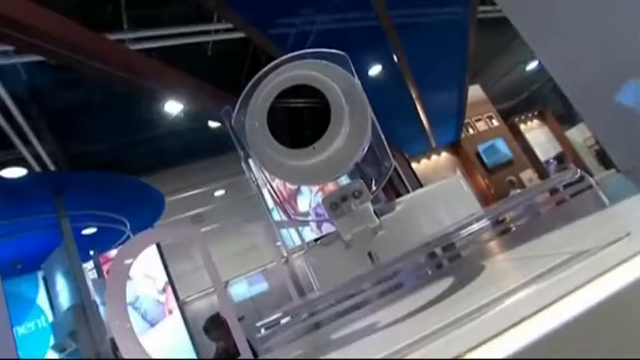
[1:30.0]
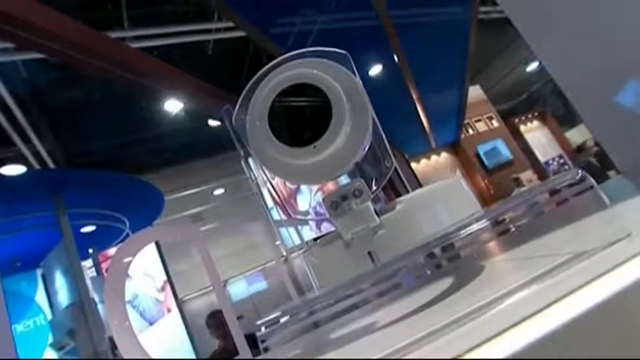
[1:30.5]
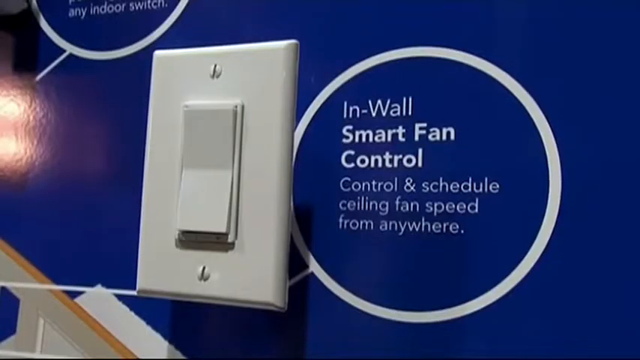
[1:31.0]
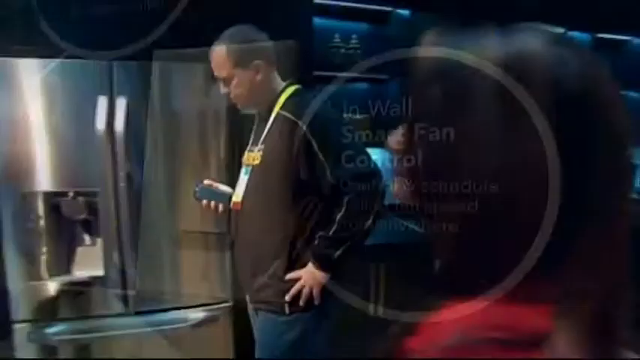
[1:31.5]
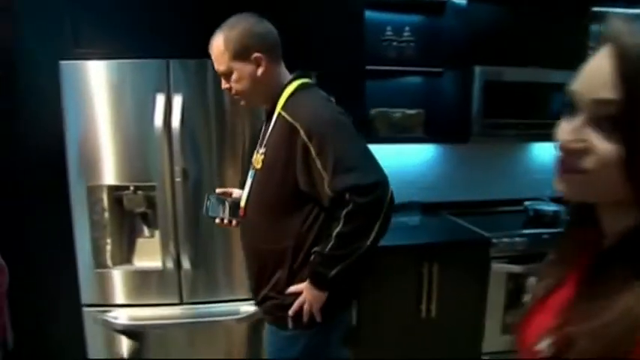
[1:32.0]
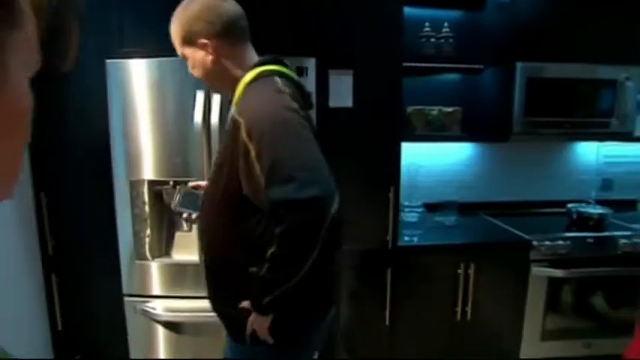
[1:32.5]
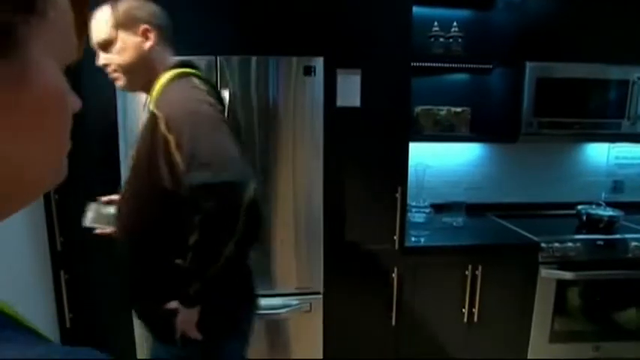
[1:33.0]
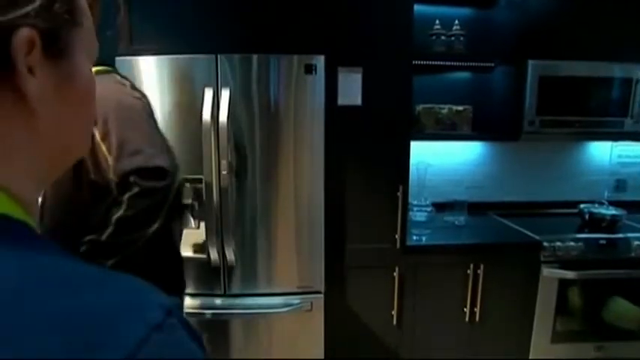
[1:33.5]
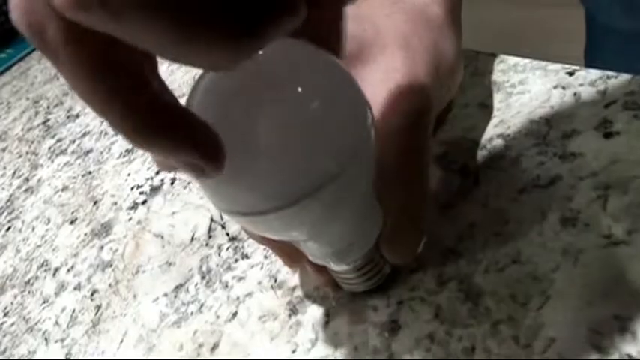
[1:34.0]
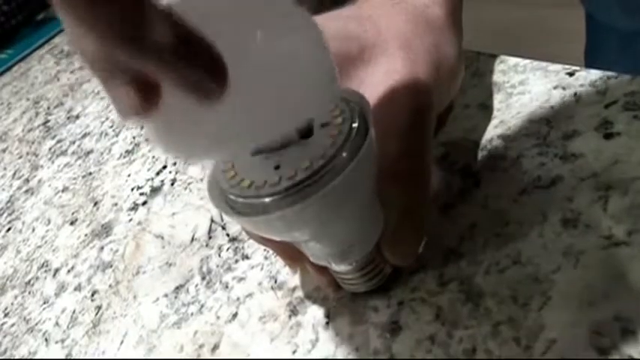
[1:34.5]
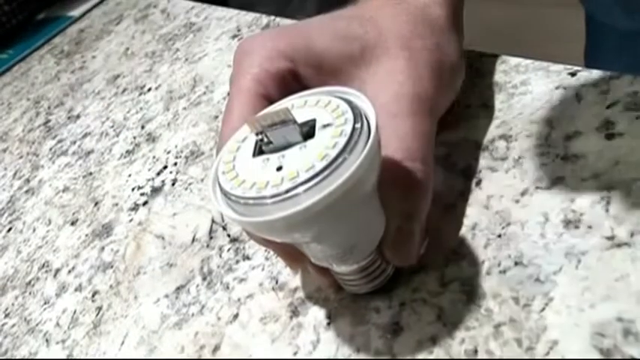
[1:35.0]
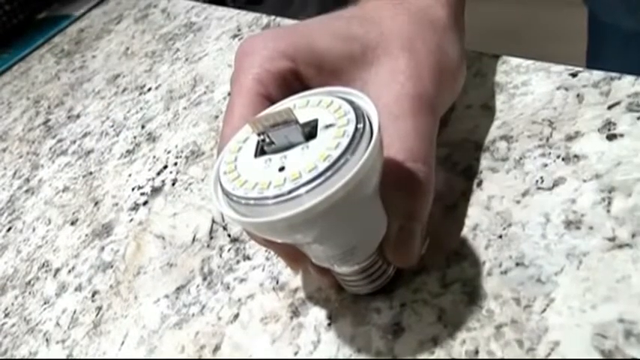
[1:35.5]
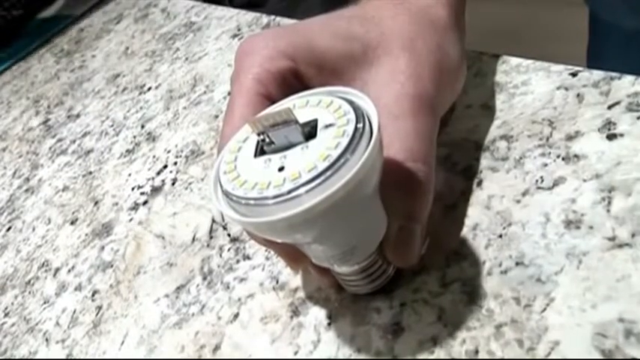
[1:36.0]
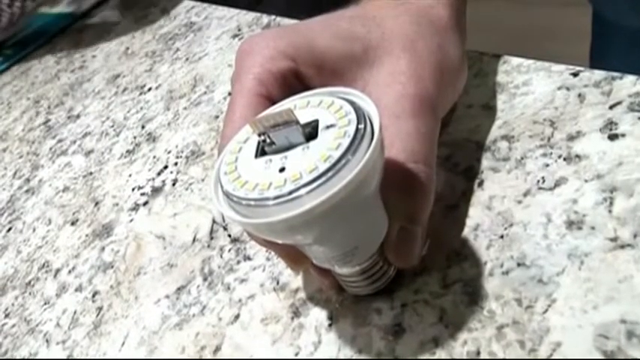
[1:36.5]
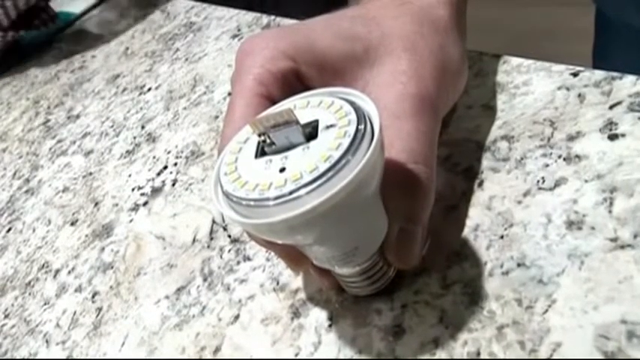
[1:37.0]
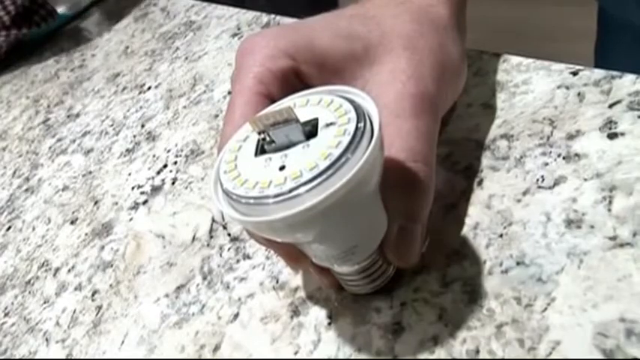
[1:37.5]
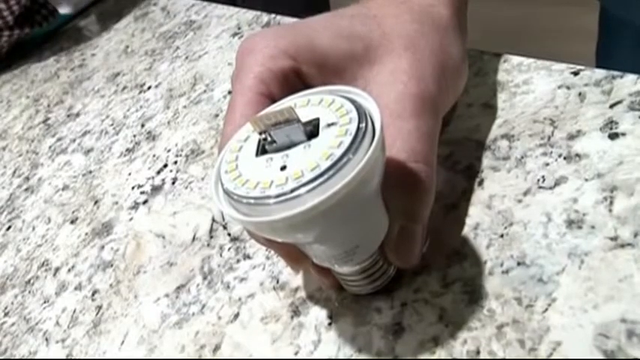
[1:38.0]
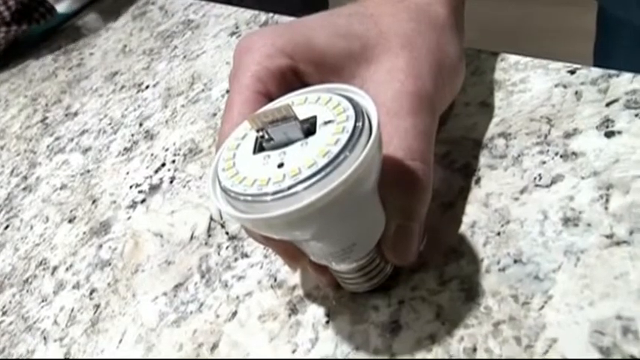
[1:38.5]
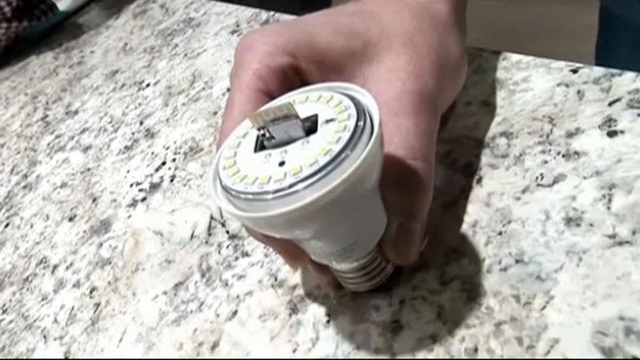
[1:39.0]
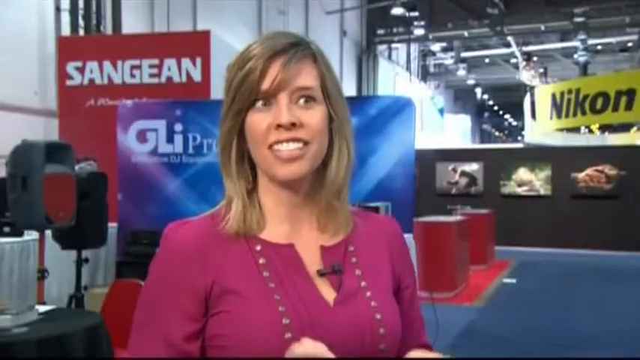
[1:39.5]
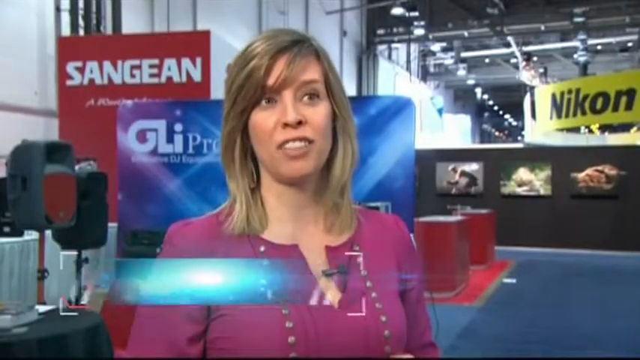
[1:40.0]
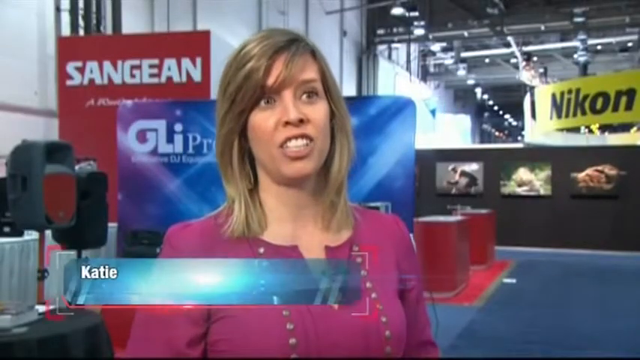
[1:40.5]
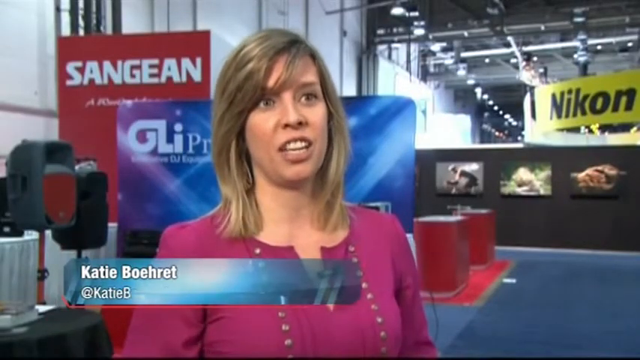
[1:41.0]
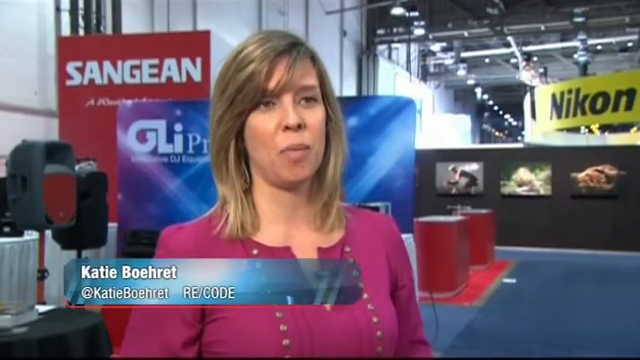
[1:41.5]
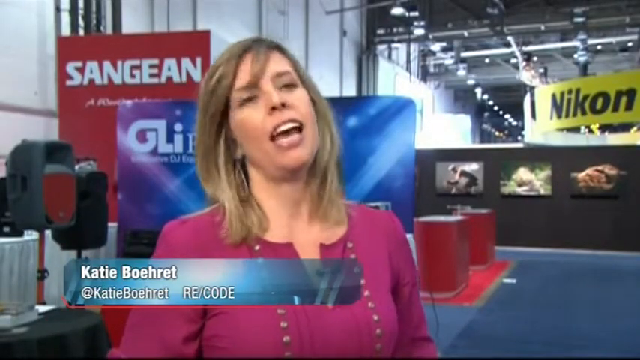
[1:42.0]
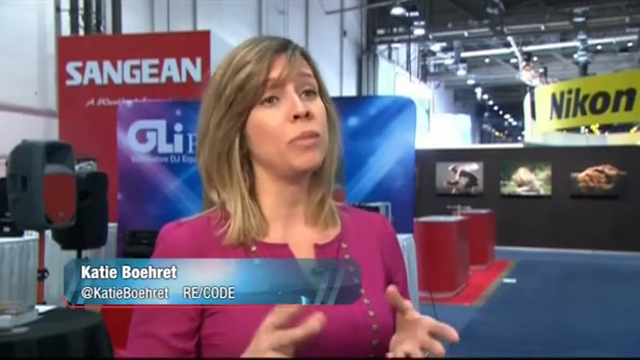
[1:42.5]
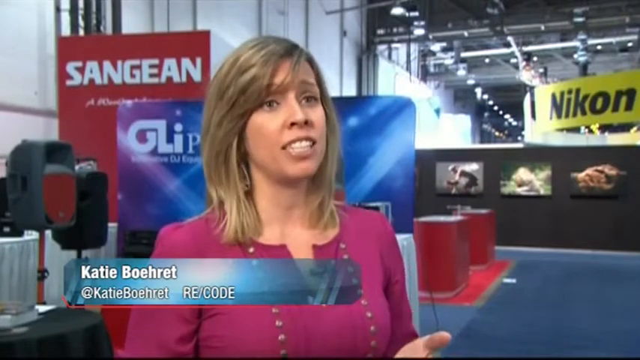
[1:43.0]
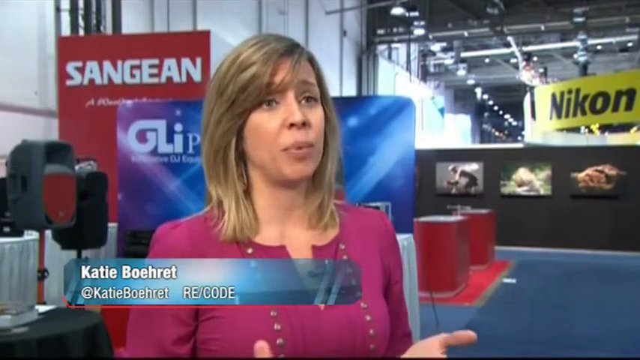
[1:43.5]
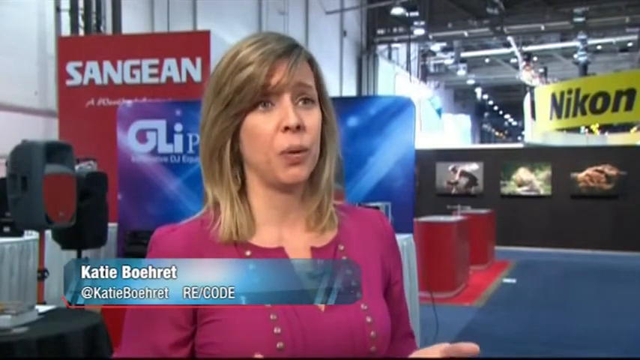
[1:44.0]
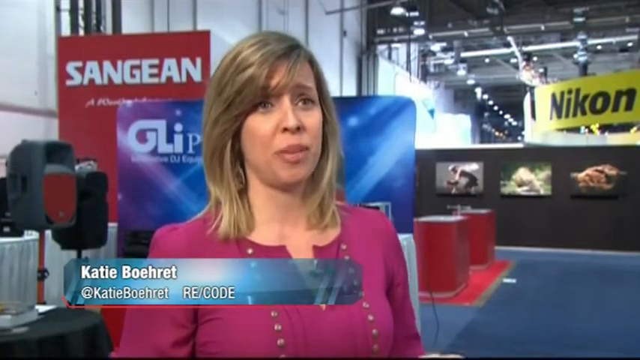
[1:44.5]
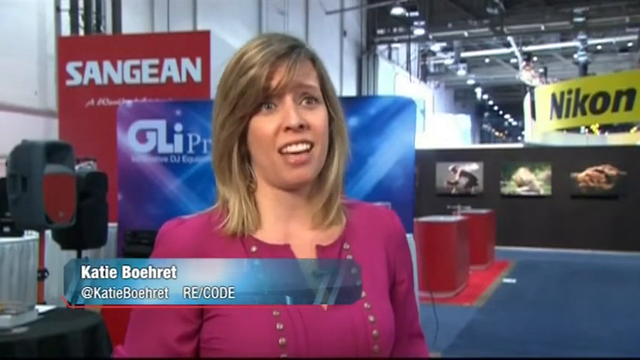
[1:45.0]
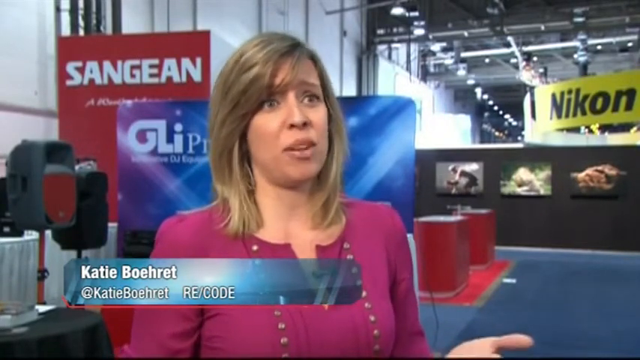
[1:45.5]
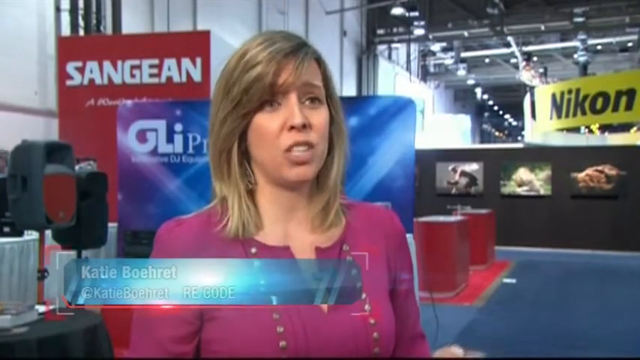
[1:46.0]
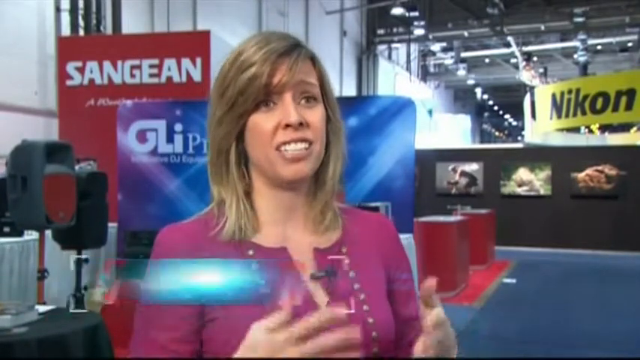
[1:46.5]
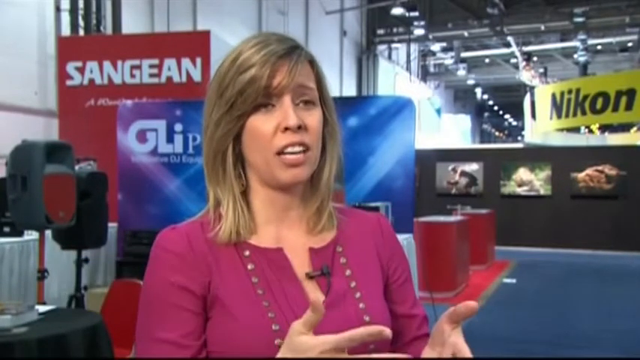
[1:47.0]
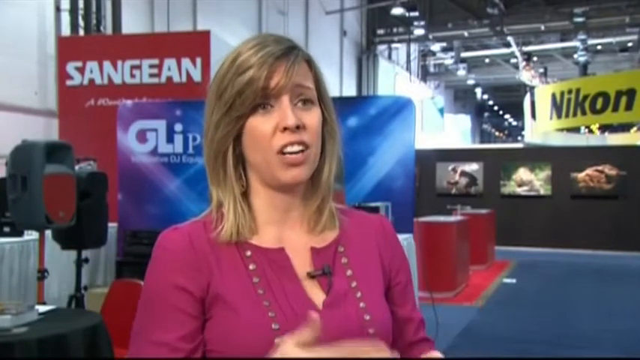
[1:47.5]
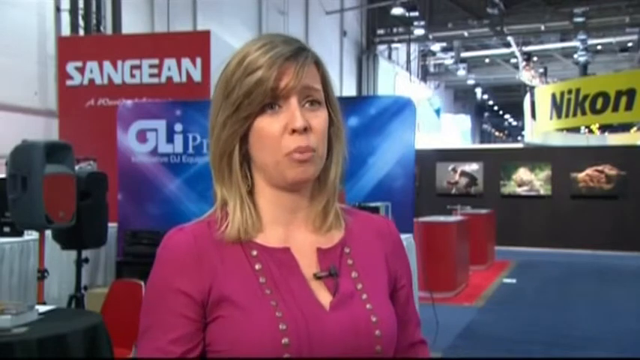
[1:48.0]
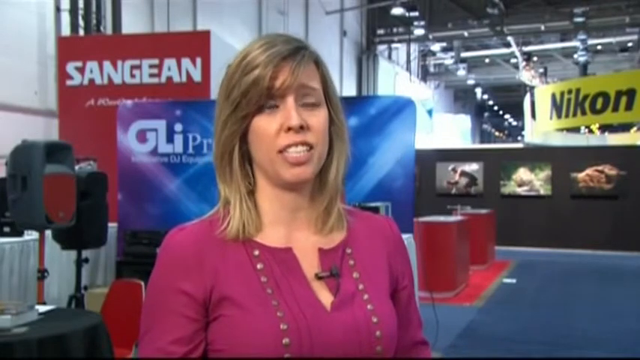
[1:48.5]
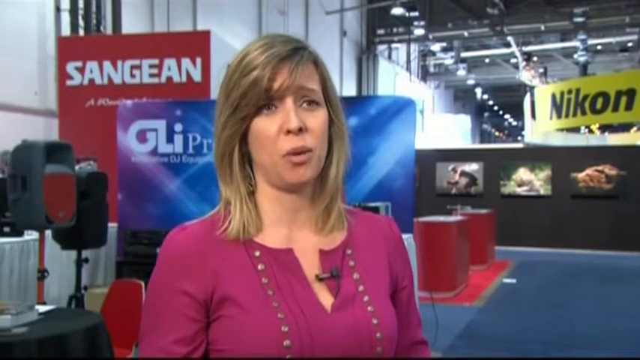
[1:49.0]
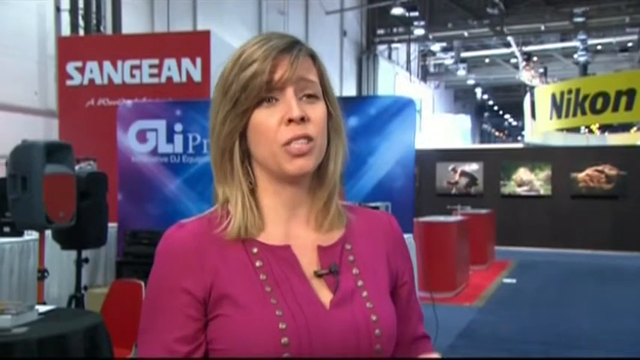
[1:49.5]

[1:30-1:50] An eyeball-like display appears, followed by a close-up of a wall switch. To its right is a white circle with blue inside, and text inside the circle reads "in wall smart fan control" and "Control and schedule ceiling fan speed from anywhere." It looks like an ordinary light switch, but the text suggests it adjusts fan speeds instead. Next is a dimly lit room, with light shining from the top and the rest dark, and a refrigerator. A balding man walks by from right to left. A close-up then shows a person holding a light bulb with their right hand near the bottom; with the other hand they untwist the top to show the inside, which looks almost like a USB-type connector with a small filament on top. A woman in a magenta jacket stands in an area with Nikon in the background on the right and a business name starting with "GLI" behind her. She is identified as Katie Borrett from RE/Code. She looks at the camera as she talks, moving her hands from left to right to emphasize a point, possibly a list of something.